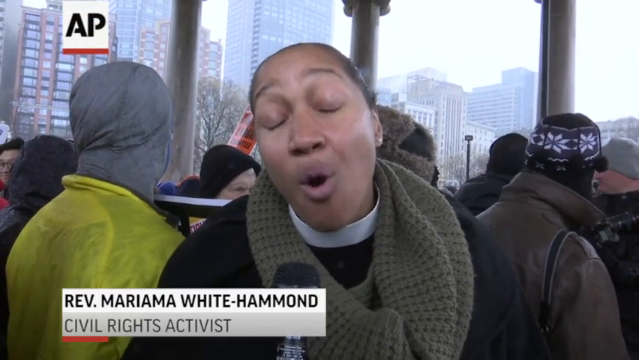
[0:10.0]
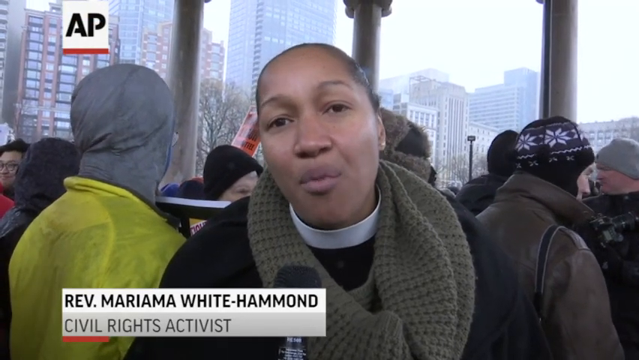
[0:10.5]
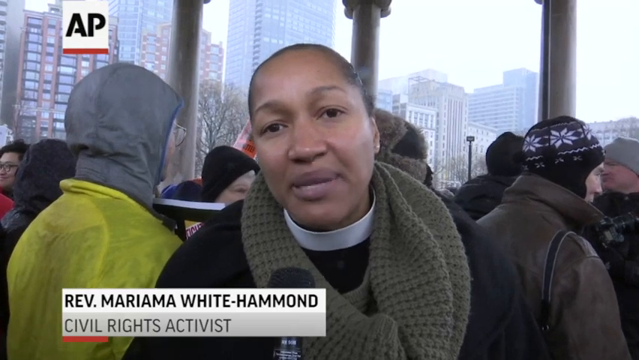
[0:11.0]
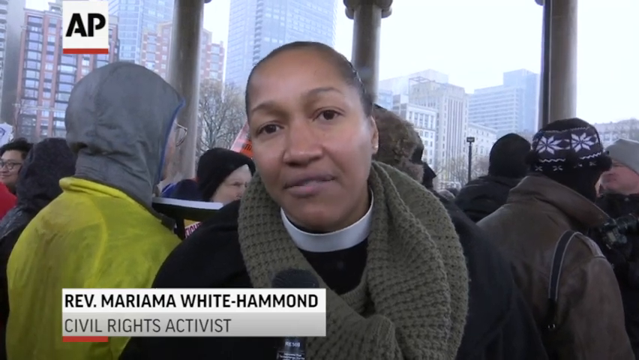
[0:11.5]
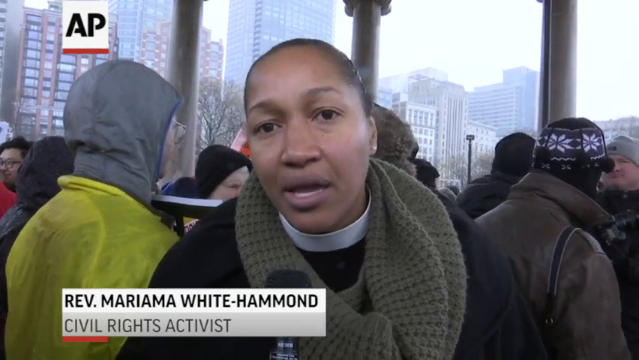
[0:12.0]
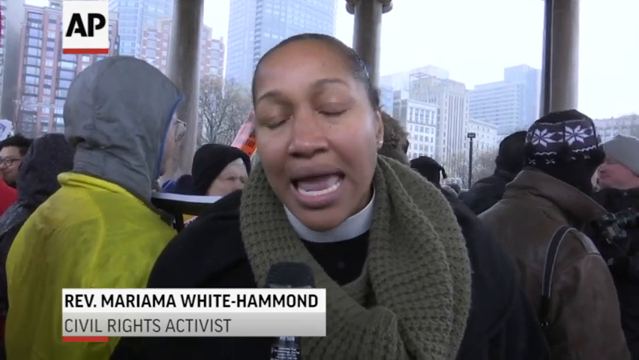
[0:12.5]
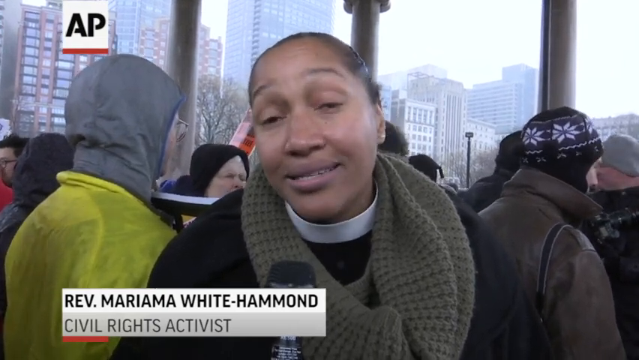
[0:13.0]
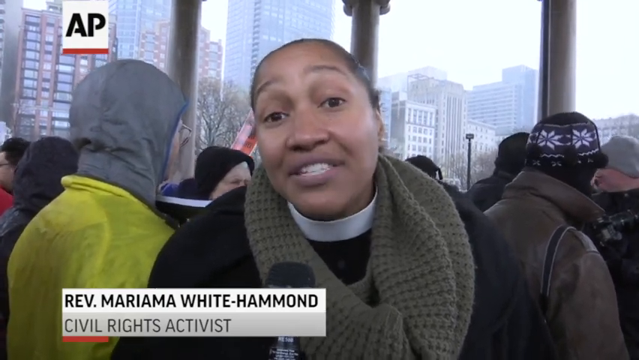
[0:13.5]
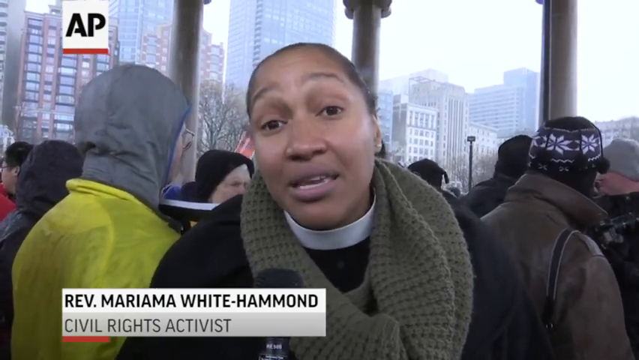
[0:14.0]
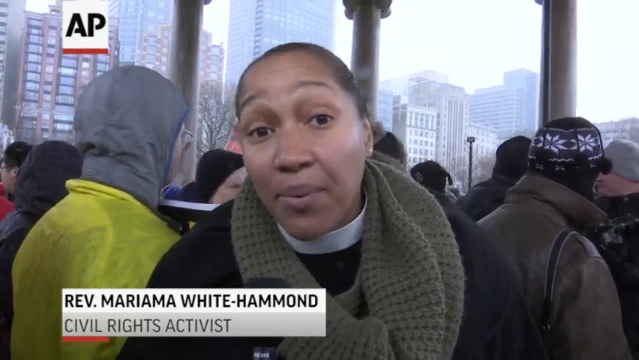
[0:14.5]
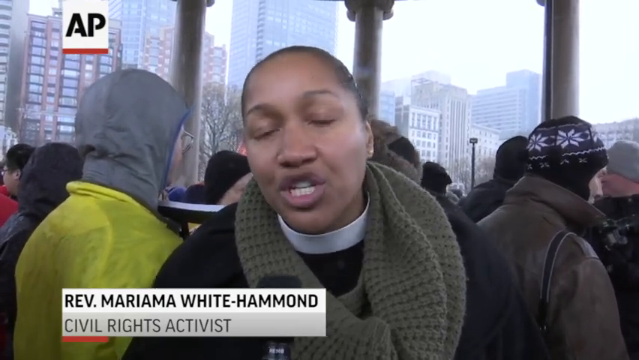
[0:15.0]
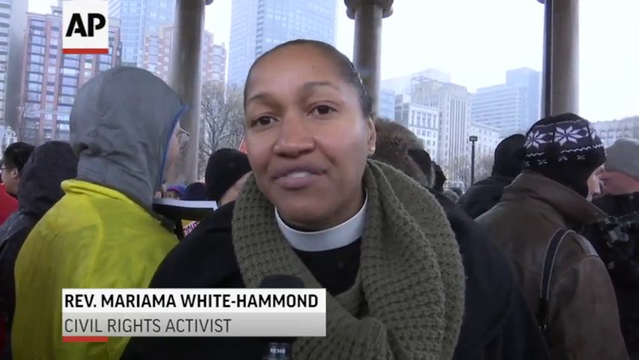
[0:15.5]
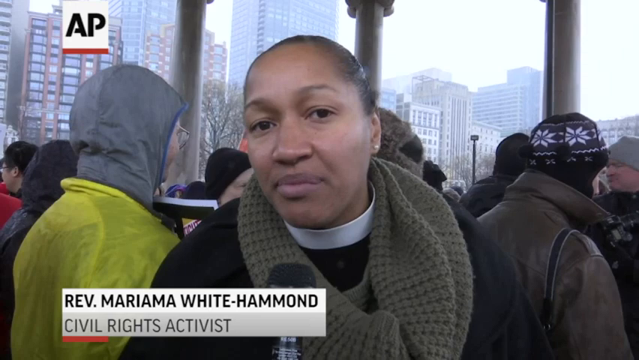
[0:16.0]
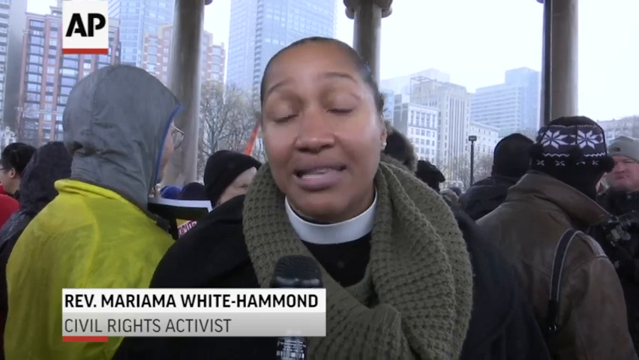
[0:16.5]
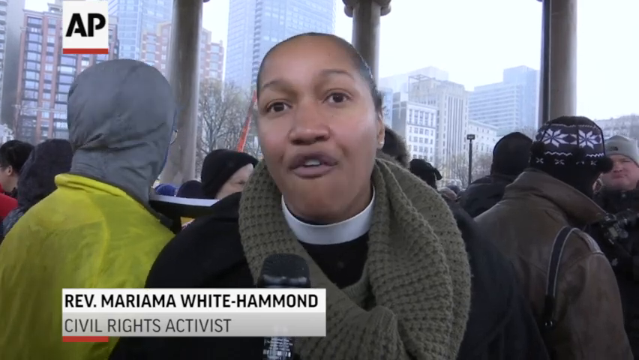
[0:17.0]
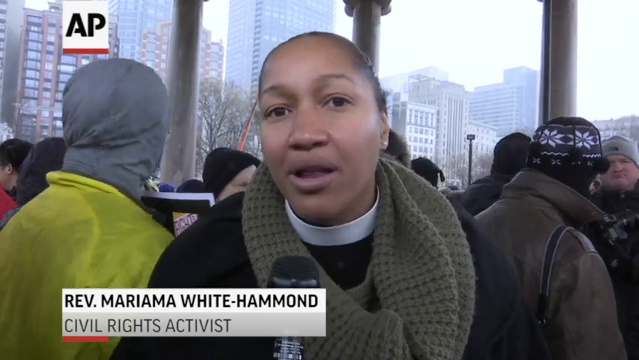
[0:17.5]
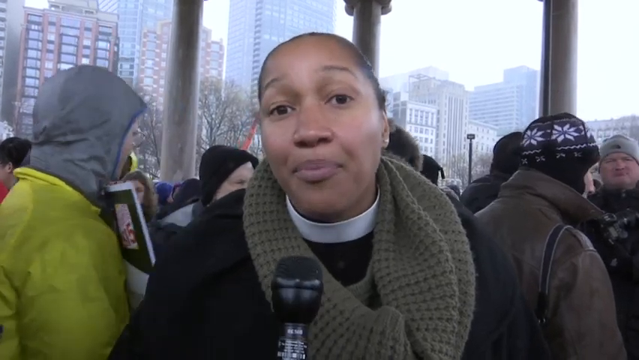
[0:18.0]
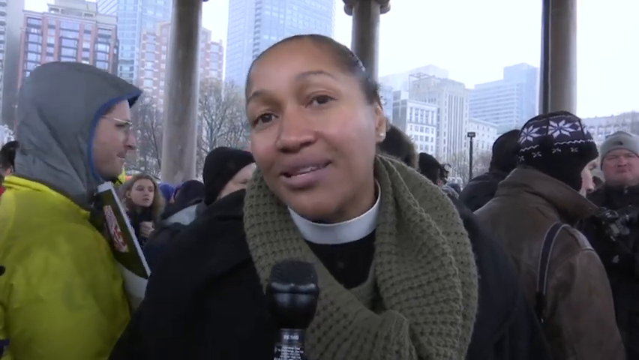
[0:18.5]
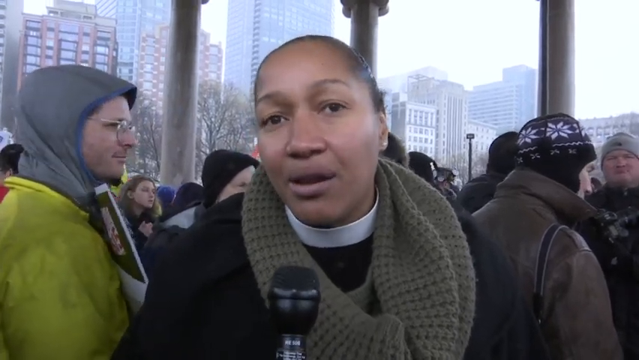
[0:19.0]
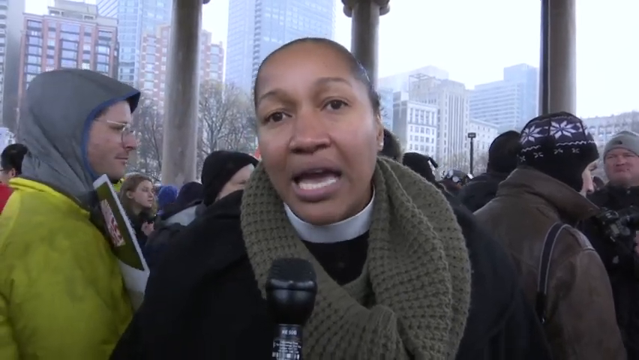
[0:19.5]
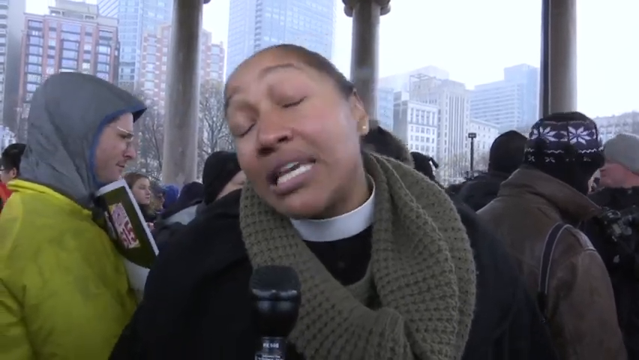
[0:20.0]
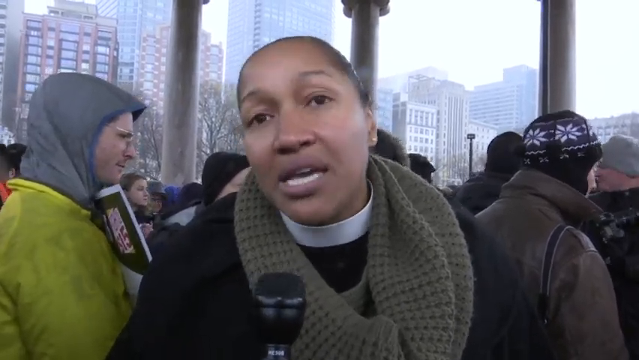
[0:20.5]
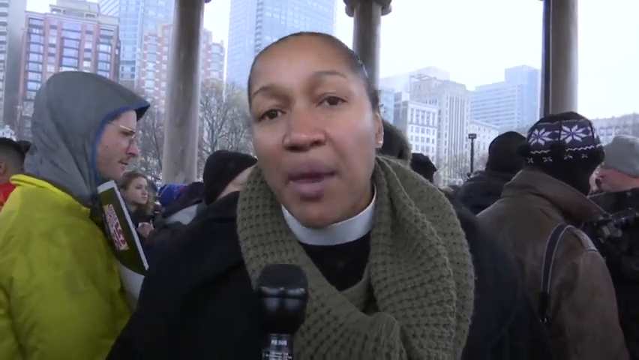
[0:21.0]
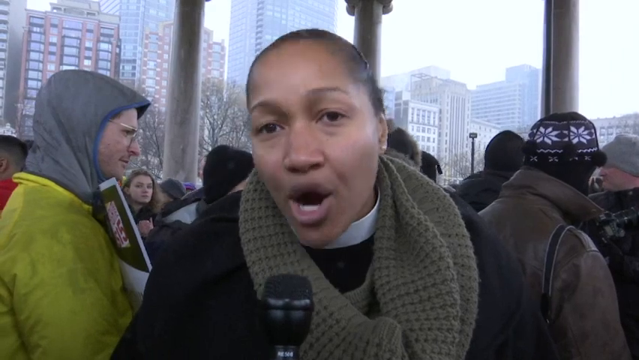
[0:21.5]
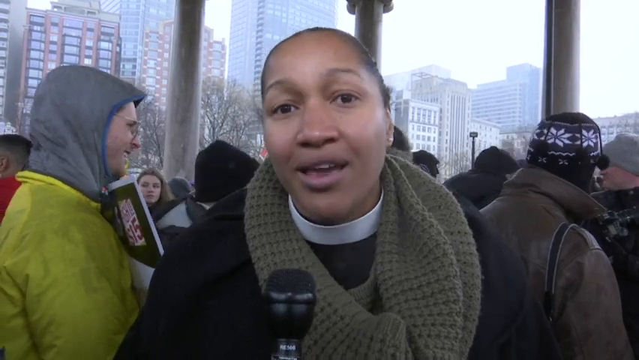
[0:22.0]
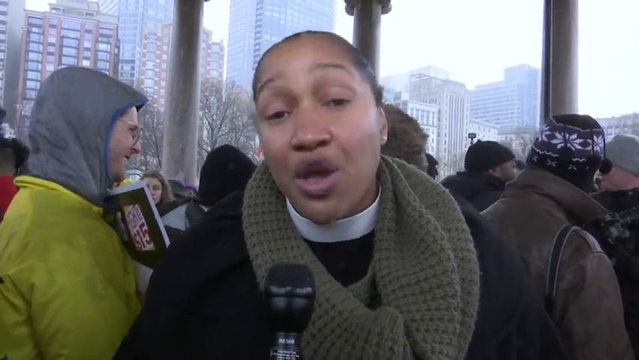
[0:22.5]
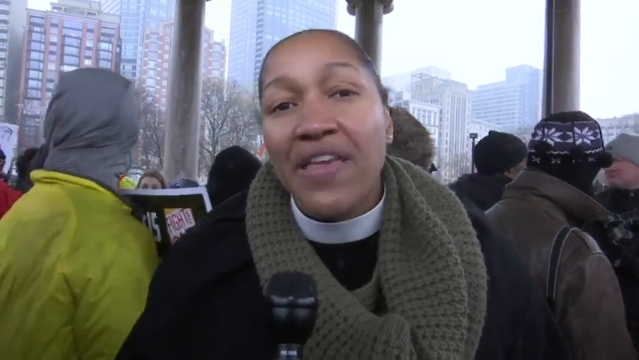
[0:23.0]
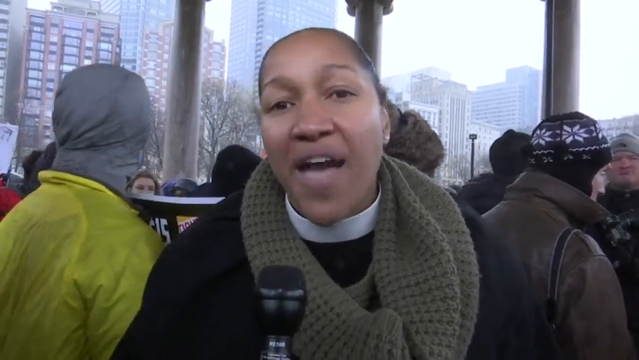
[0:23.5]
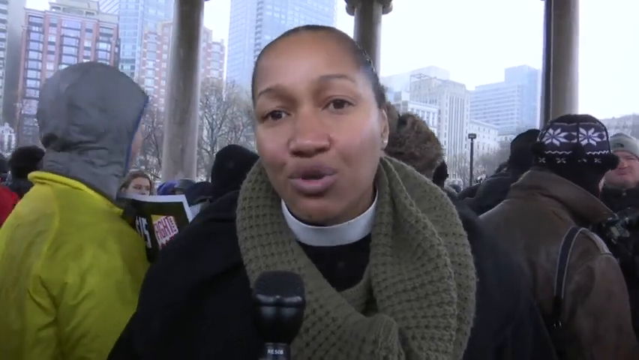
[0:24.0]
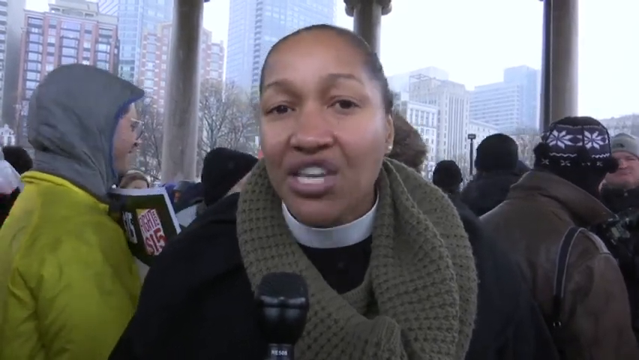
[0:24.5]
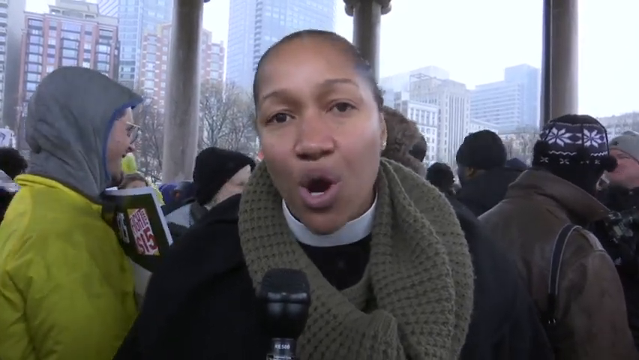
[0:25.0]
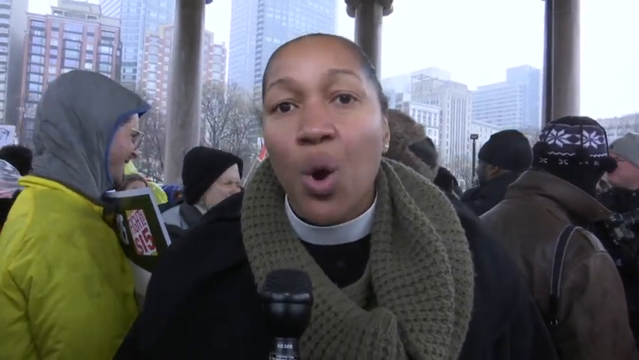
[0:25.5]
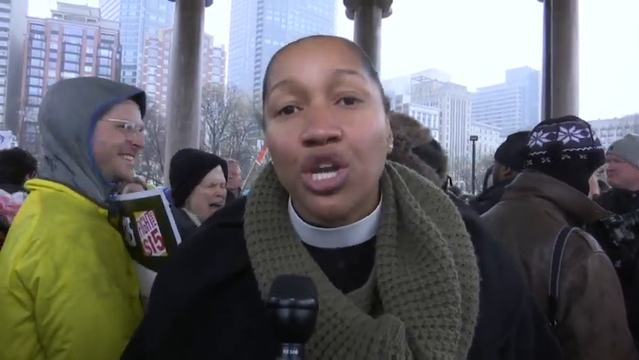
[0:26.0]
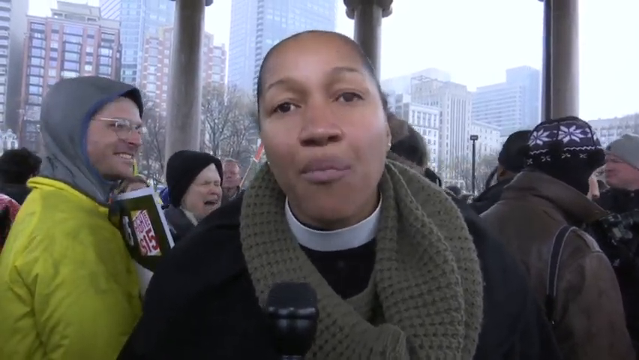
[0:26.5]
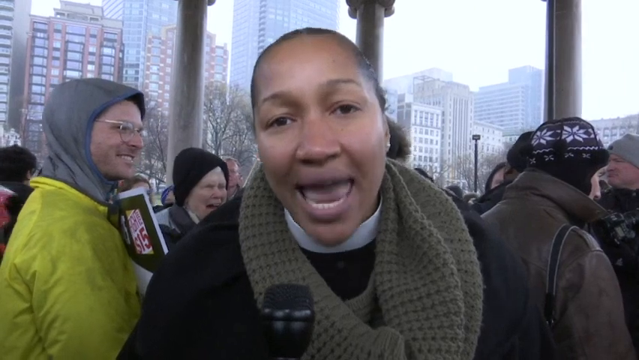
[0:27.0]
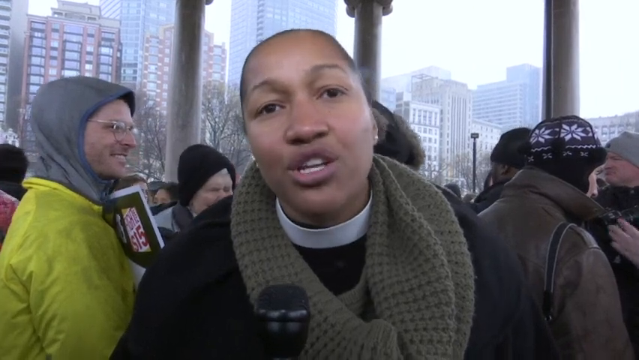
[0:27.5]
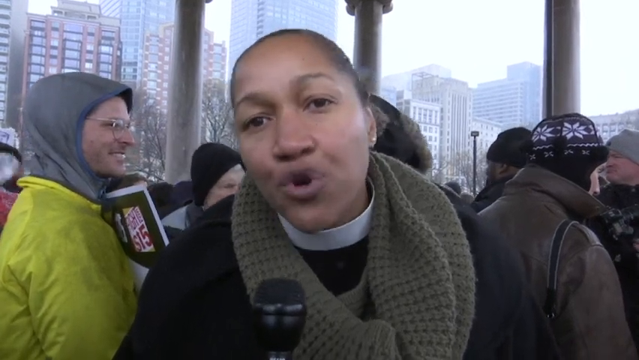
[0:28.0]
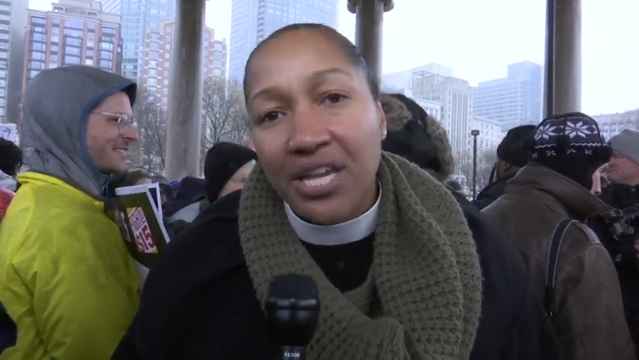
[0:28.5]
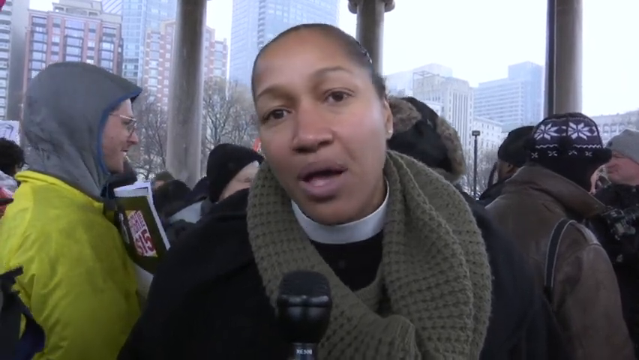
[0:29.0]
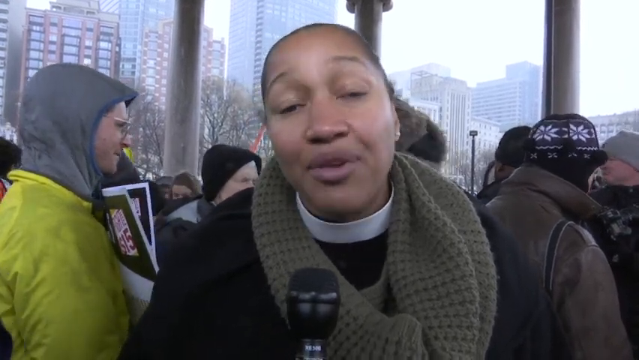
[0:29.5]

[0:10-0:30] The video is by the Associated Press. Reverend Mariama White-Hammond, a civil rights activist, stands in the middle of a large protest gathering about fair wages for restaurant employees. It is a rainy, very gloomy day, and many people are bundled up in coats and hats. She speaks to the interviewer, wearing a scarf, a white collar and her black uniform. People stand around her holding up signs, and it is quite crowded. The setting looks like a city center, with lots of tall skyscraper-like buildings around them. They are underneath an area with large pillars, which looks like it could be a government building, shielding them from the rain.